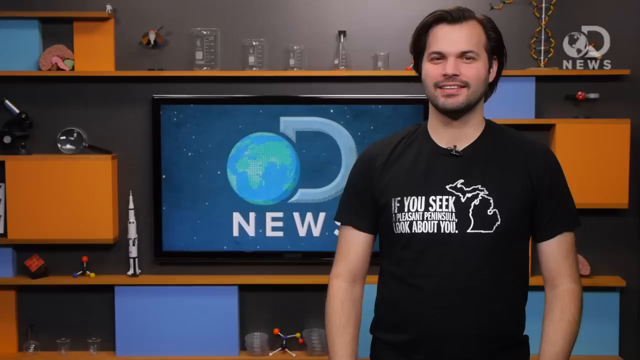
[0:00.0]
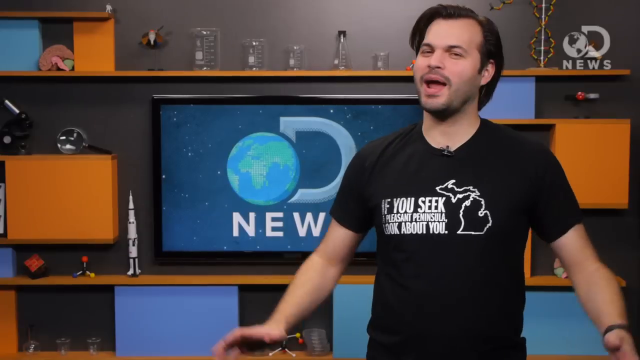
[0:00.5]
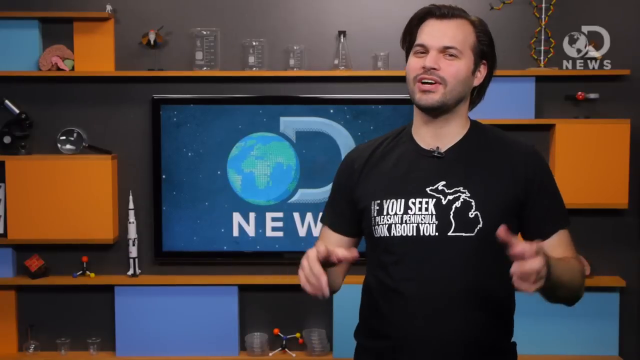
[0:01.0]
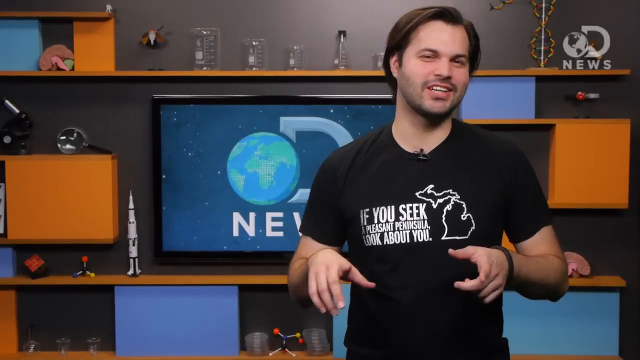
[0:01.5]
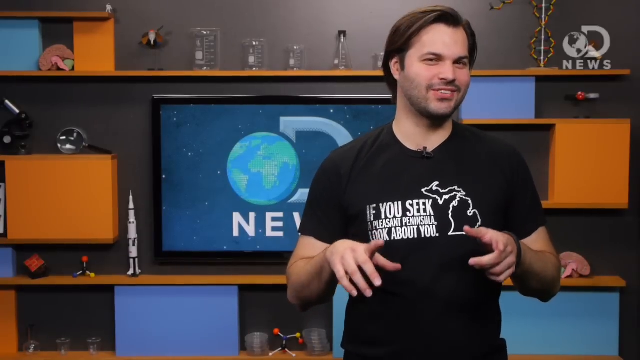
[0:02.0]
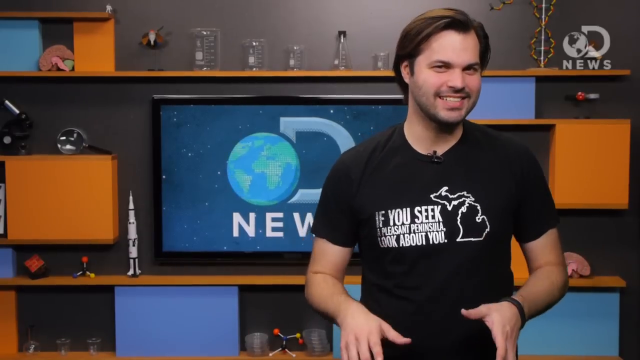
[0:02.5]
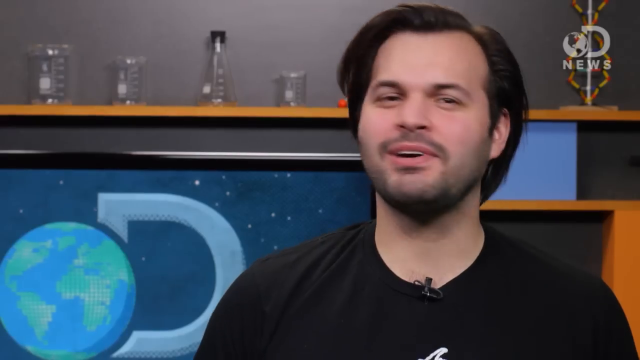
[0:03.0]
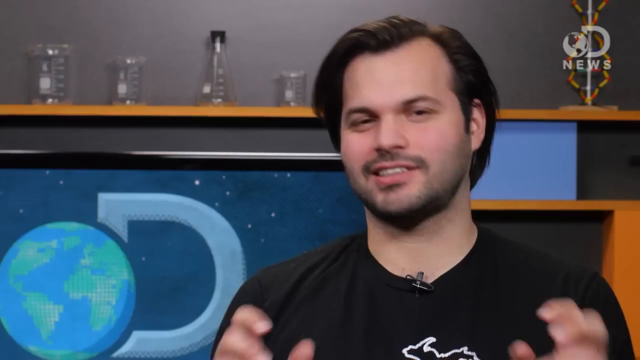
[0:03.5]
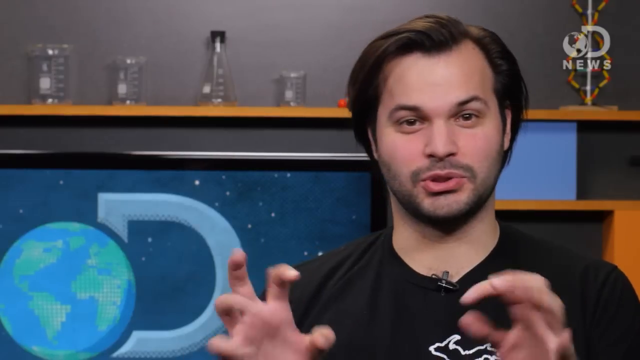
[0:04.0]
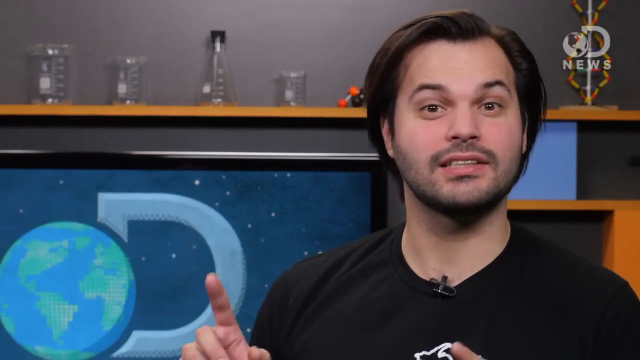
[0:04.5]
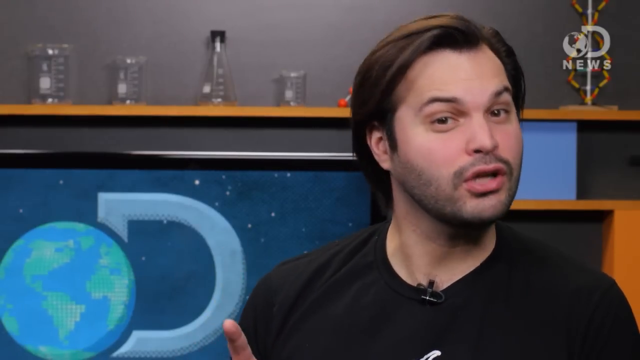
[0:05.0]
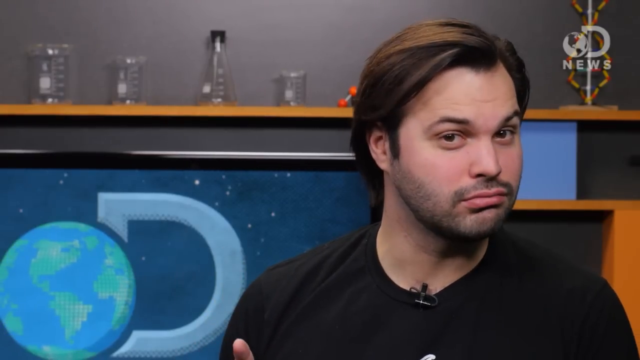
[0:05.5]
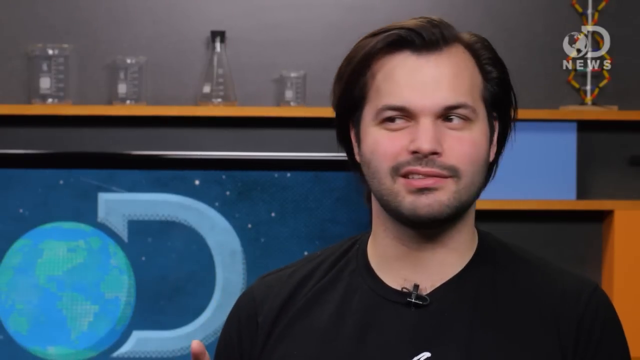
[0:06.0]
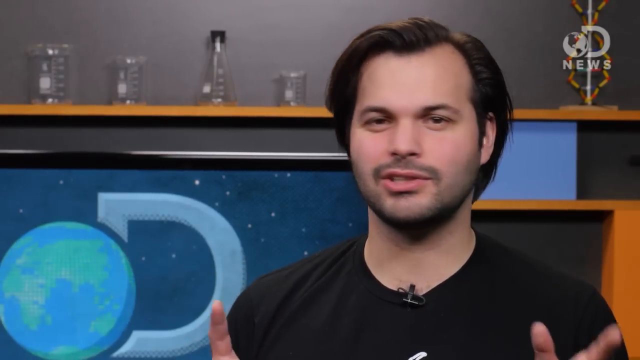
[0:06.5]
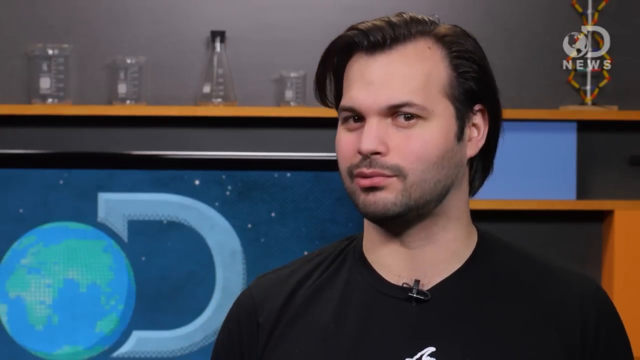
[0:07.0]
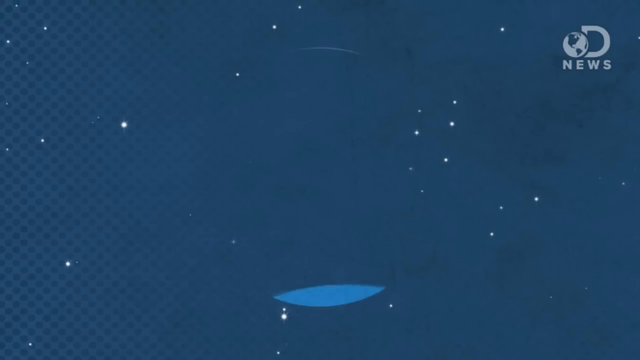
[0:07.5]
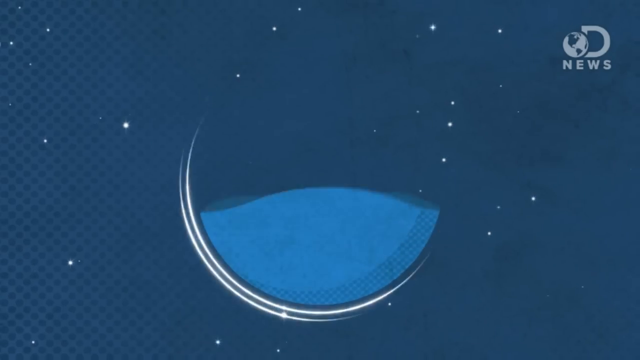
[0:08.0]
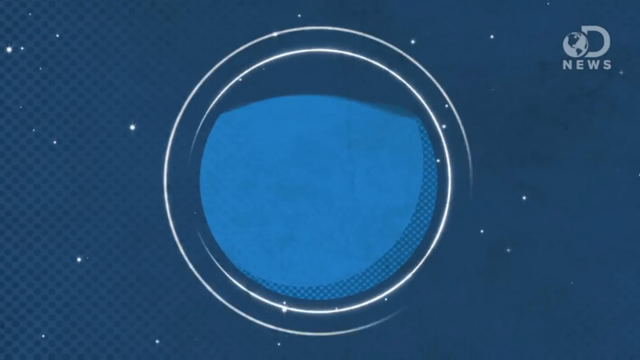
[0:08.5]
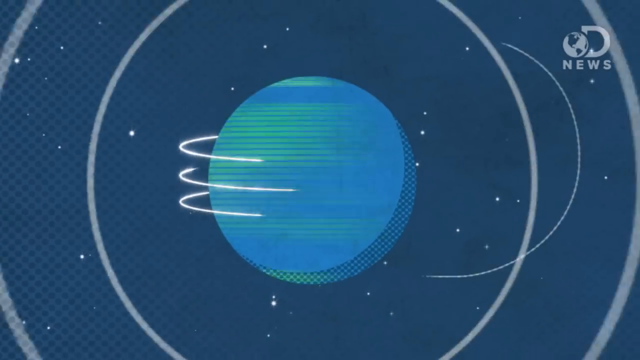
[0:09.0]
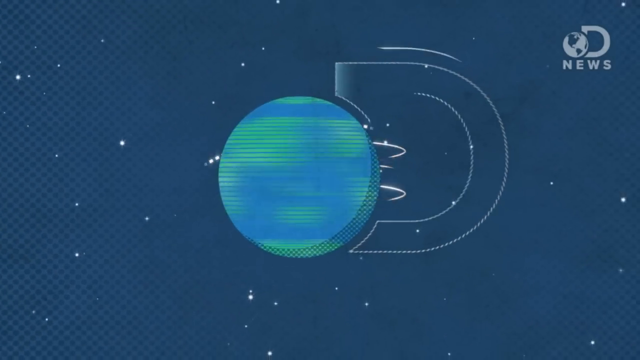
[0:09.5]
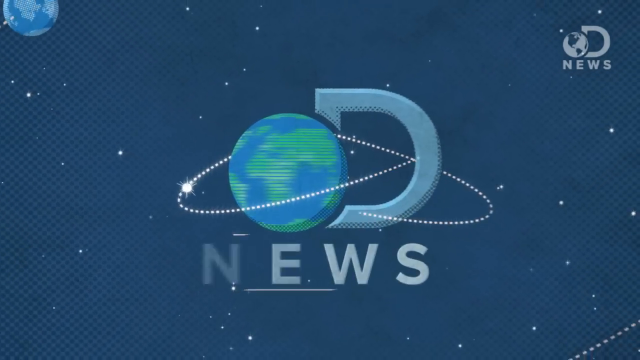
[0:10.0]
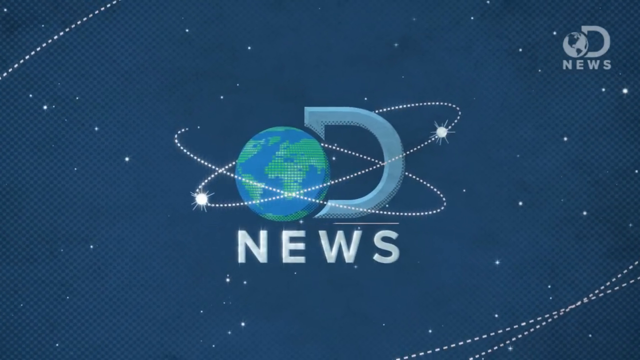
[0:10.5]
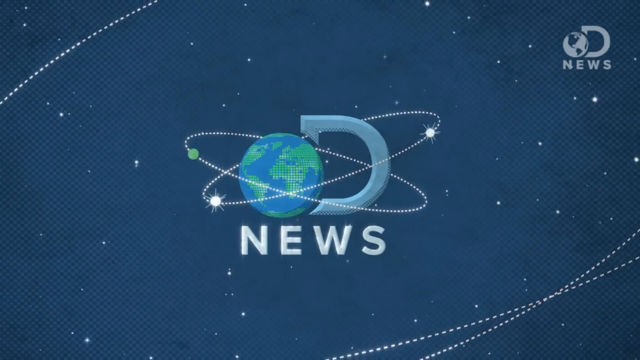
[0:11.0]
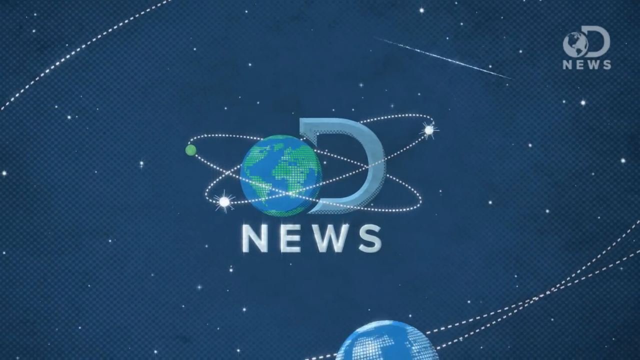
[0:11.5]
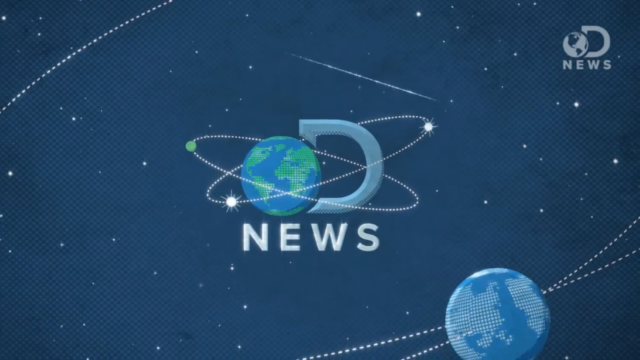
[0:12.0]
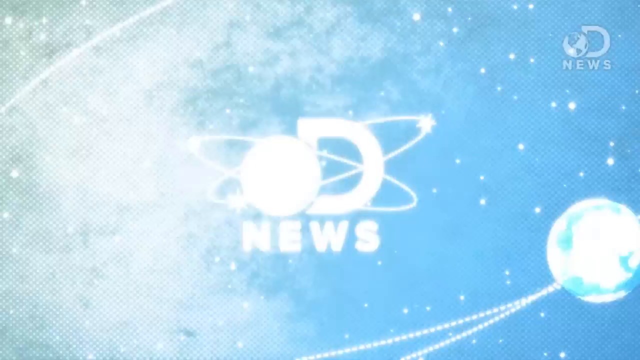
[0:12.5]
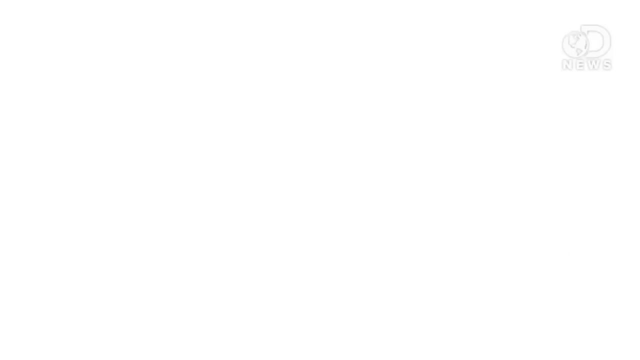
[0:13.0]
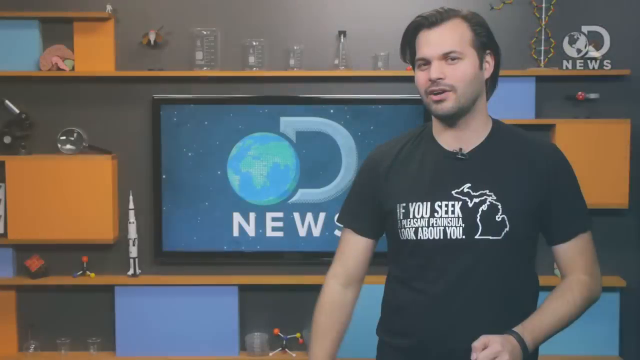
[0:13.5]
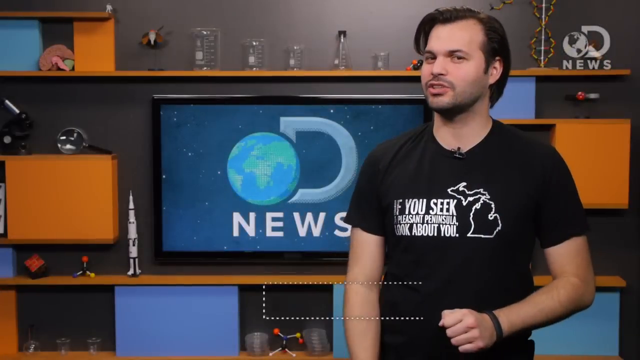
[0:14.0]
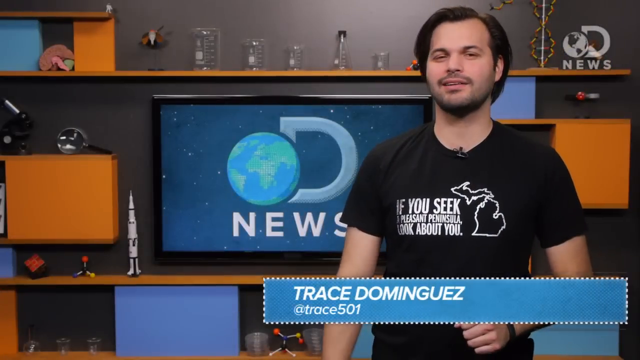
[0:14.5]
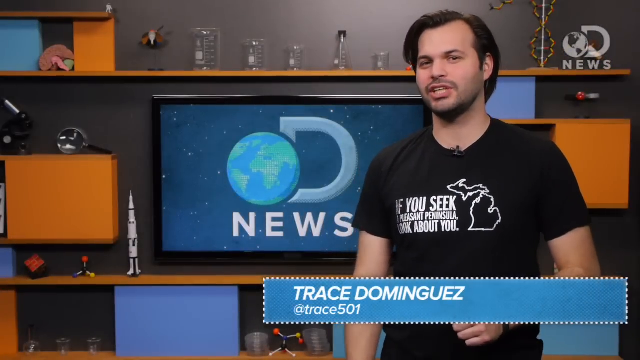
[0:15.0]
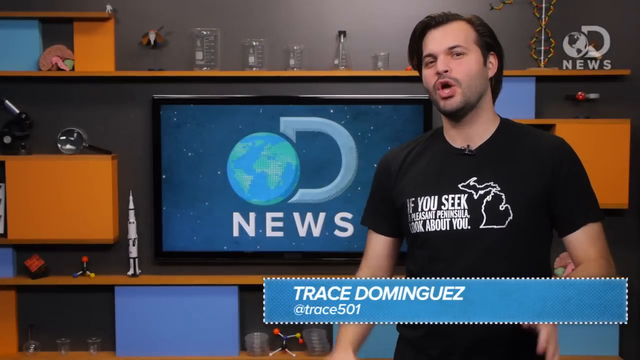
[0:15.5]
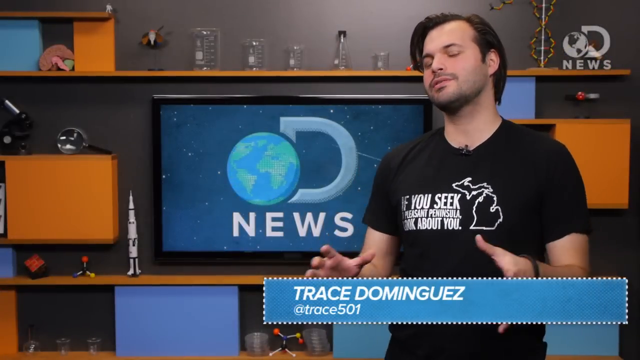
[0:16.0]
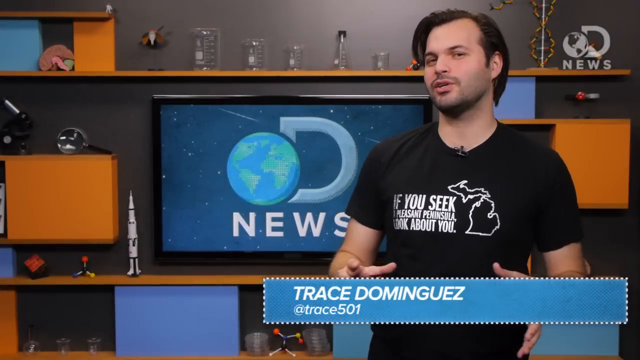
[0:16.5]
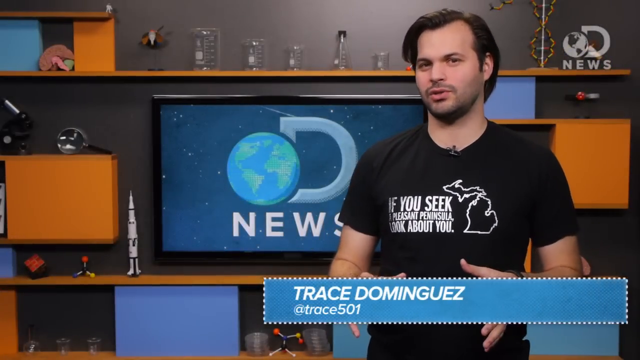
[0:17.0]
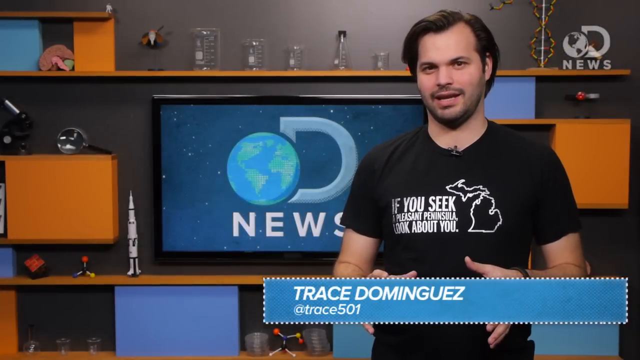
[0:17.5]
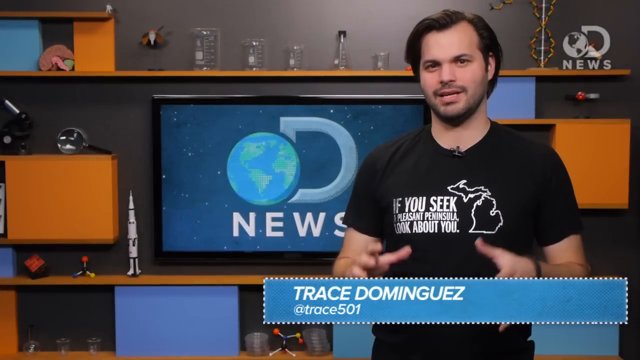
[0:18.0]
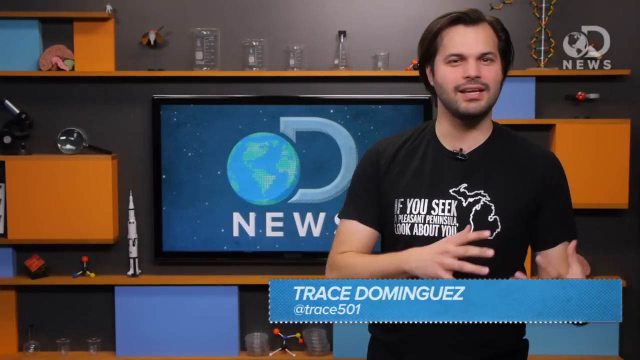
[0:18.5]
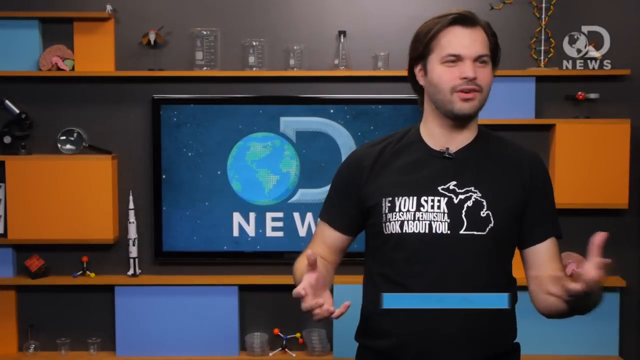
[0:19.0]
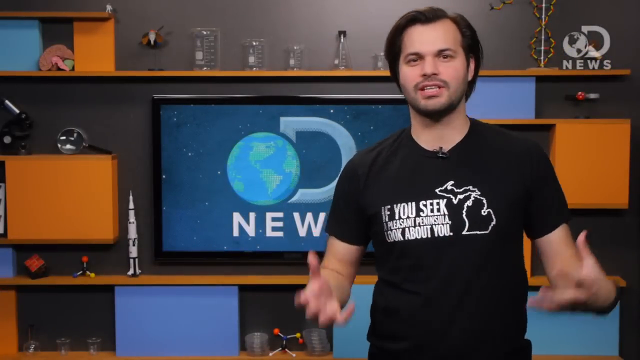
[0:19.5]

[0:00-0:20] A youngish man, probably in his 20s, with brown hair appears in what seems to be a news summary called D News. On-screen text identifies him as "Trace Dominguez at trace 501". He stands in front of what is probably a digital background for D News, though it might be real, and he is apparently a TV news anchor of some sort. On the wall behind him are a TV of about 32 inches, maybe 43 inches, a model of a Saturn 5 rocket, a magnifying glass, what appears to be a microscope and what appears to be a Rubik's cube. Up on the top shelf are five measuring beakers, and on the back shelf is what might be a model of a human brain. His t-shirt says "if you seek a pleasant peninsula look about you".